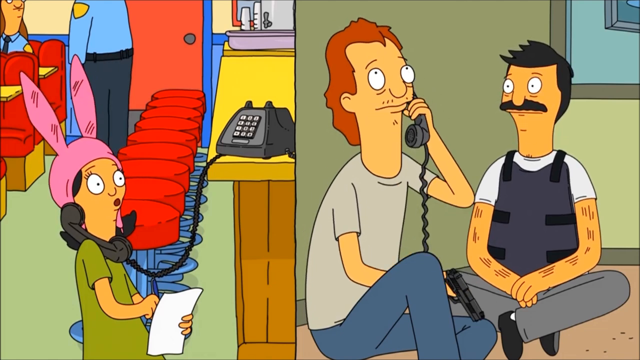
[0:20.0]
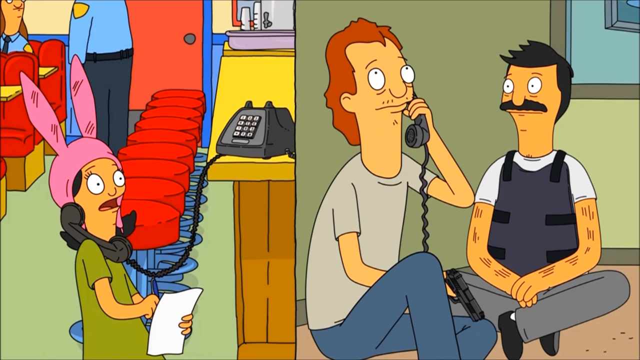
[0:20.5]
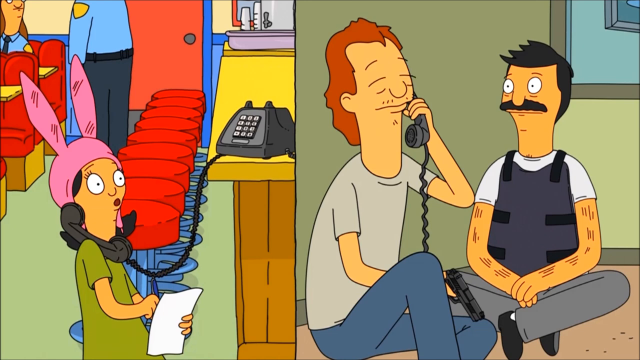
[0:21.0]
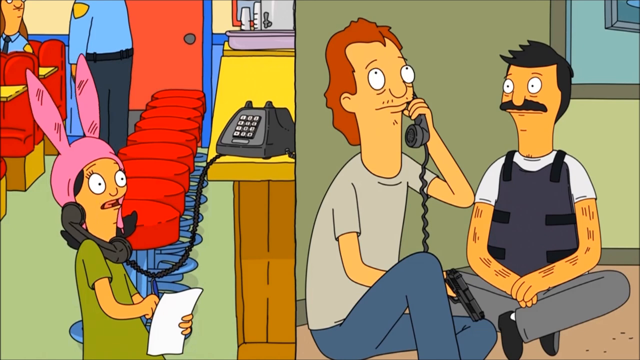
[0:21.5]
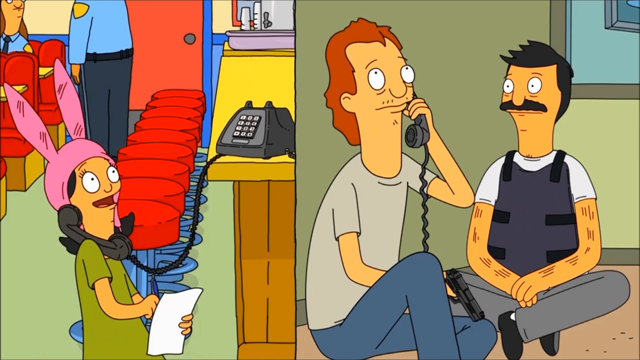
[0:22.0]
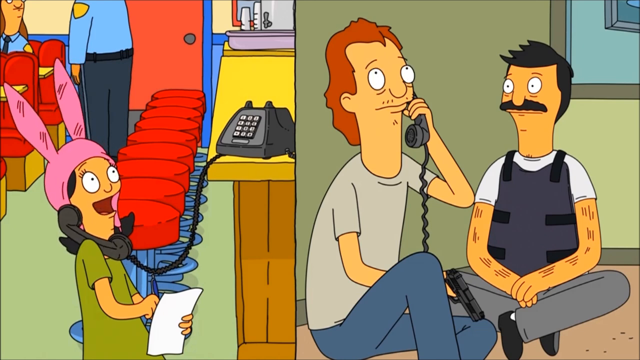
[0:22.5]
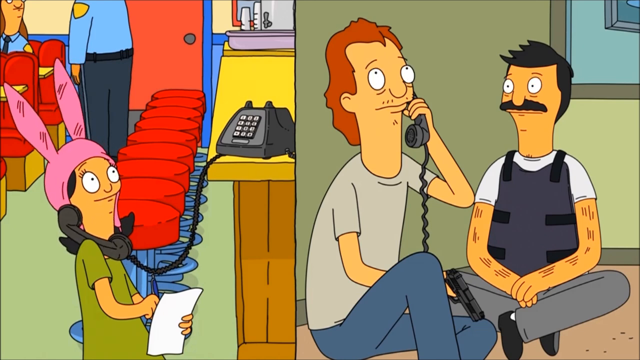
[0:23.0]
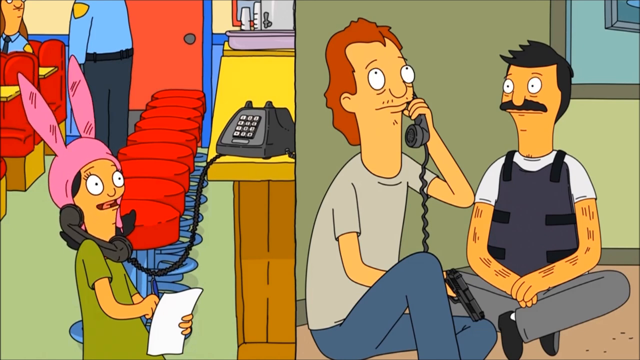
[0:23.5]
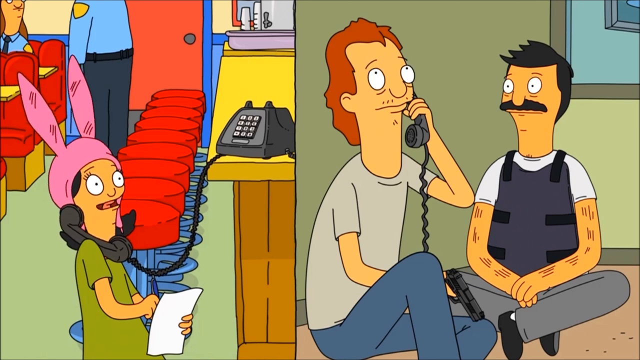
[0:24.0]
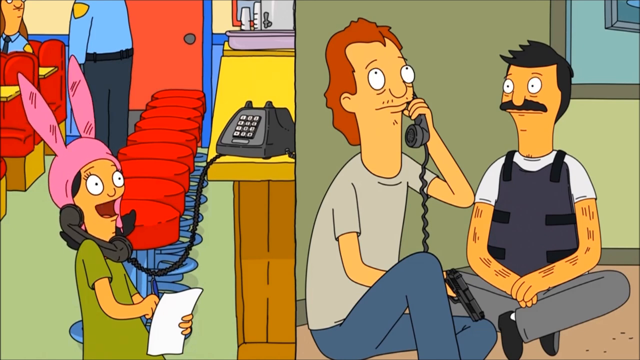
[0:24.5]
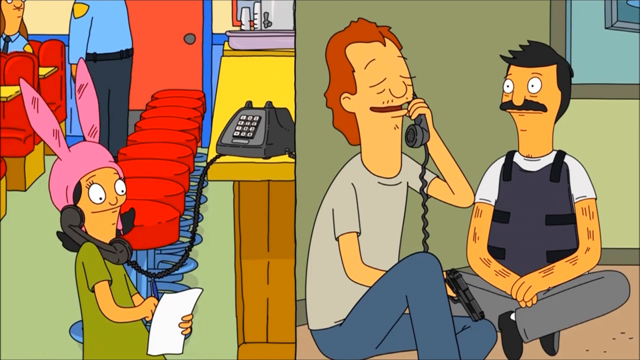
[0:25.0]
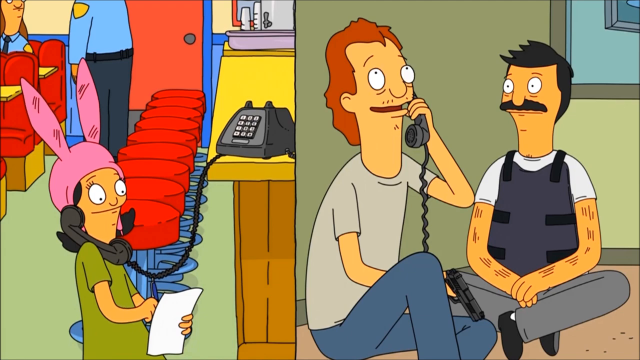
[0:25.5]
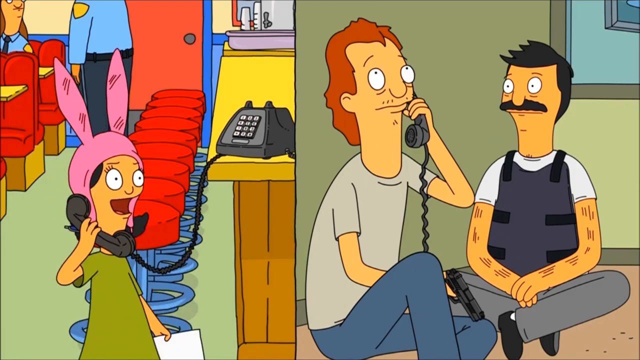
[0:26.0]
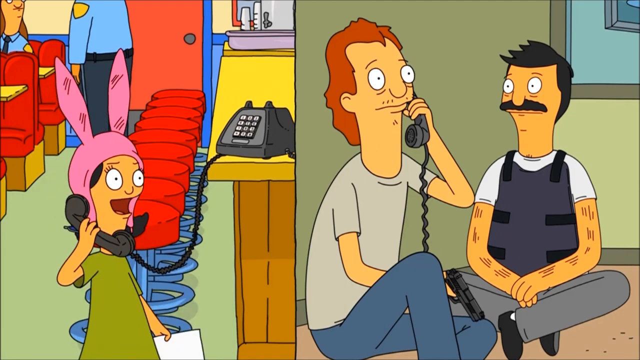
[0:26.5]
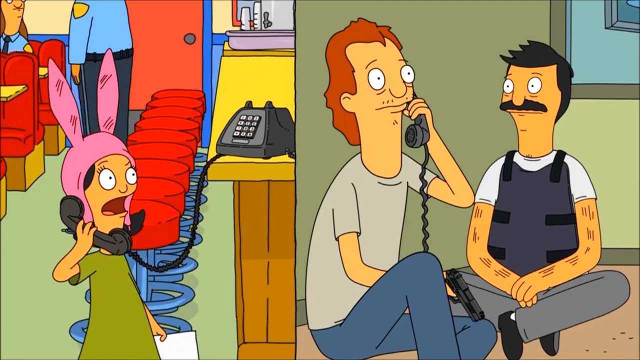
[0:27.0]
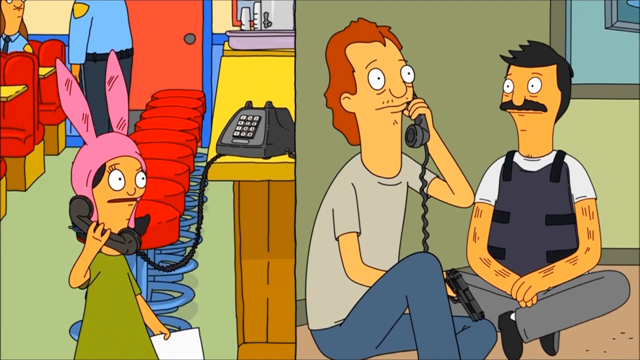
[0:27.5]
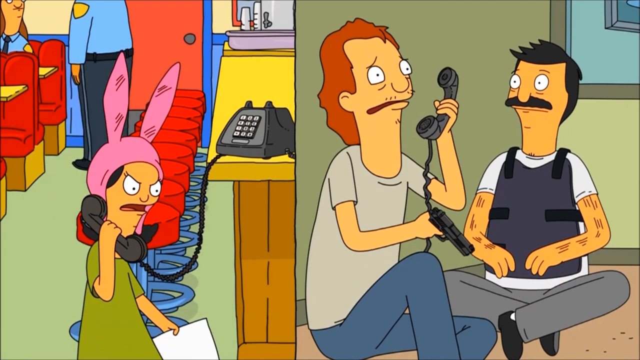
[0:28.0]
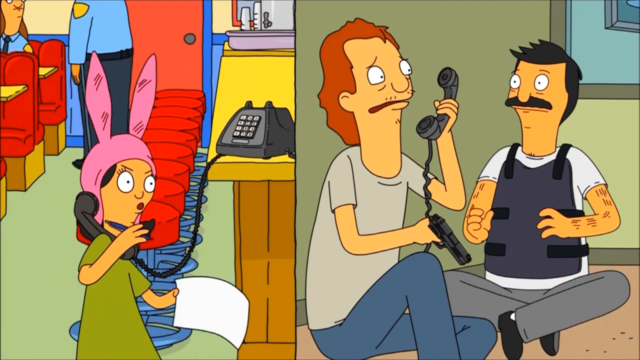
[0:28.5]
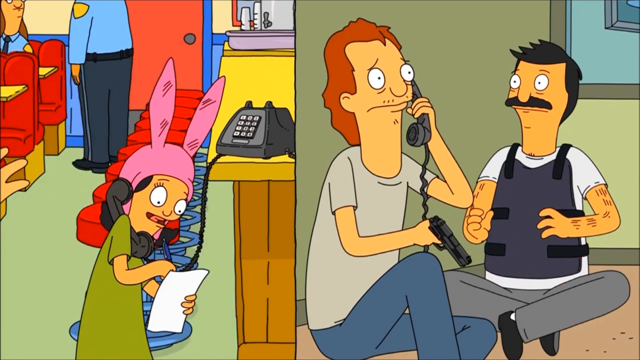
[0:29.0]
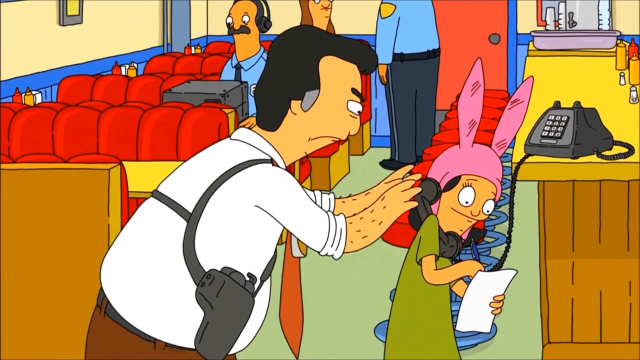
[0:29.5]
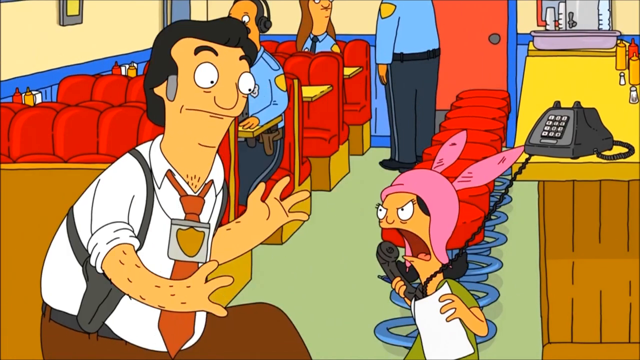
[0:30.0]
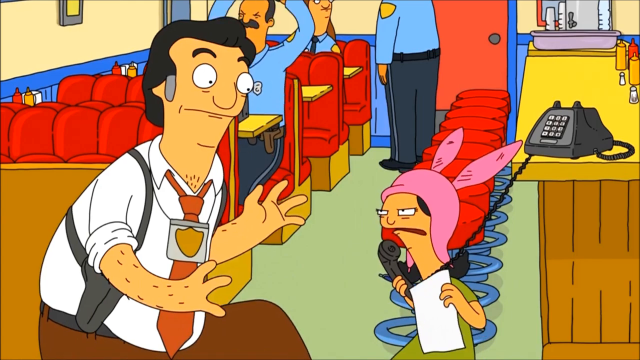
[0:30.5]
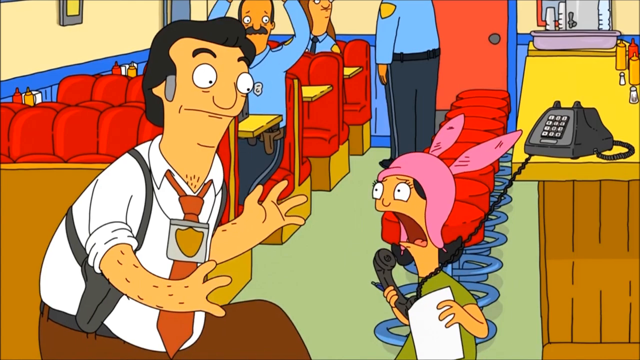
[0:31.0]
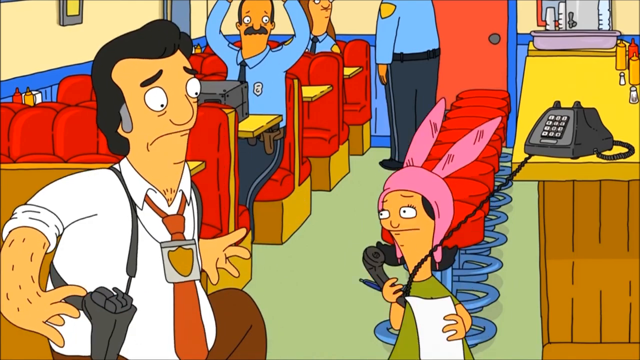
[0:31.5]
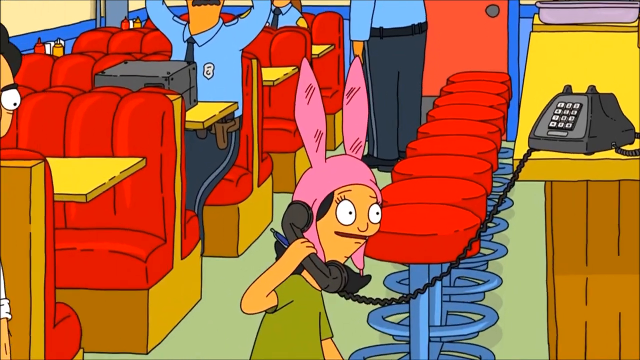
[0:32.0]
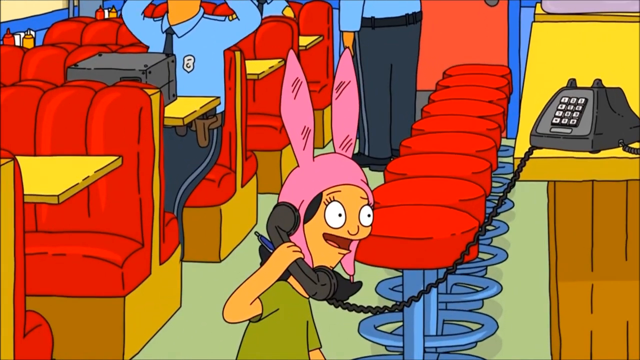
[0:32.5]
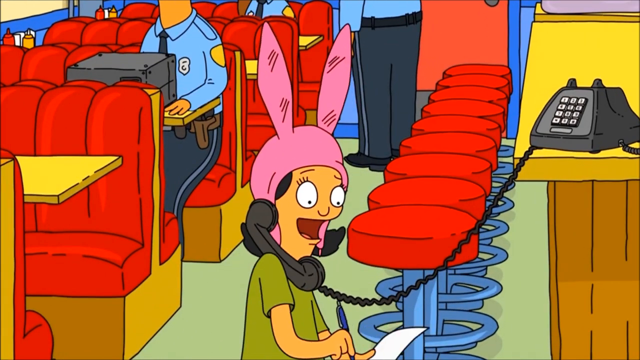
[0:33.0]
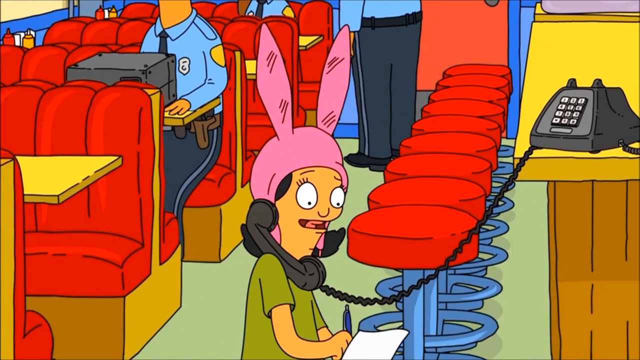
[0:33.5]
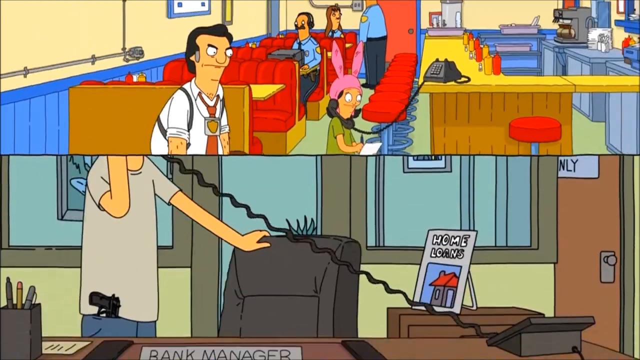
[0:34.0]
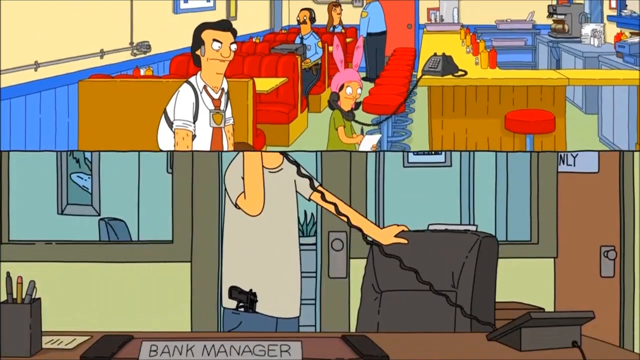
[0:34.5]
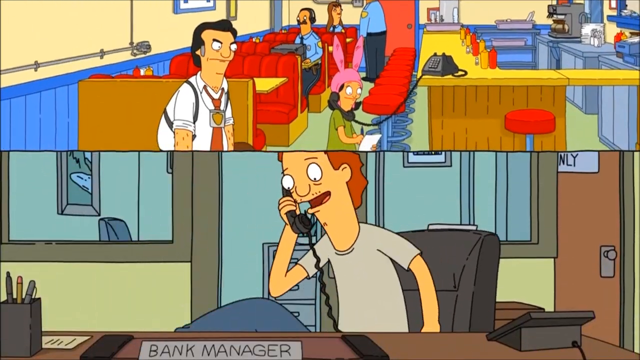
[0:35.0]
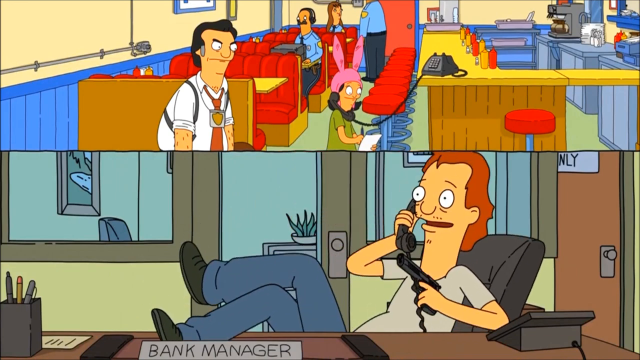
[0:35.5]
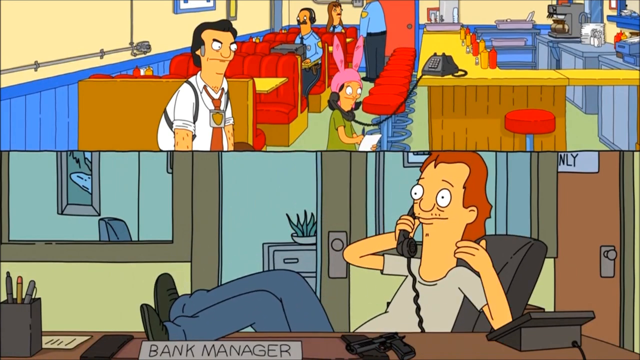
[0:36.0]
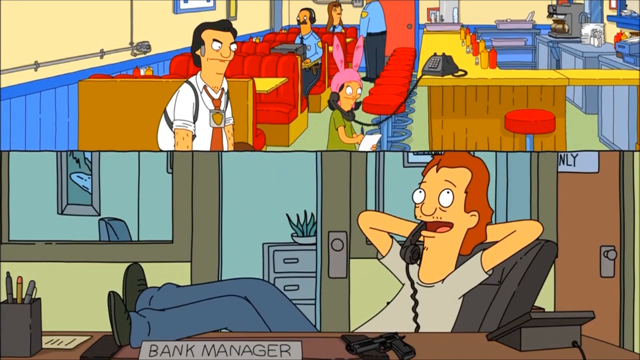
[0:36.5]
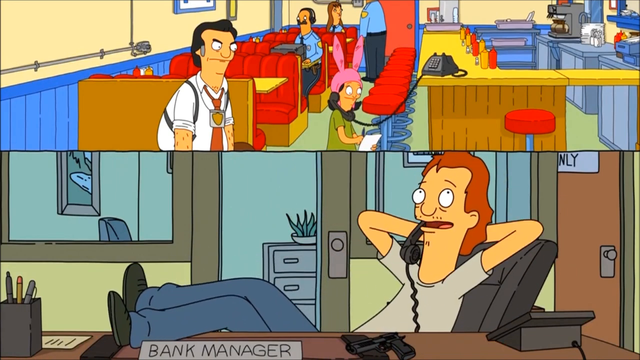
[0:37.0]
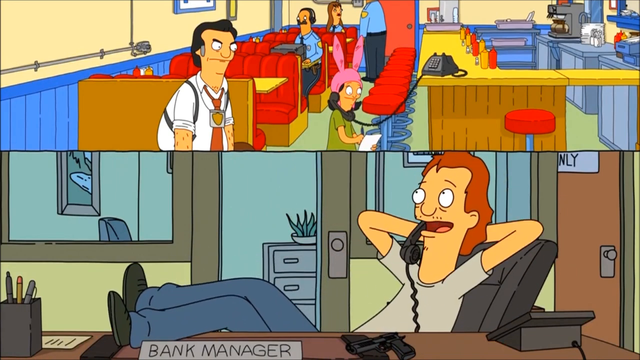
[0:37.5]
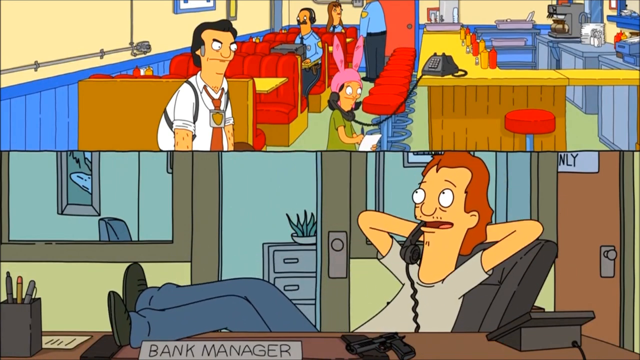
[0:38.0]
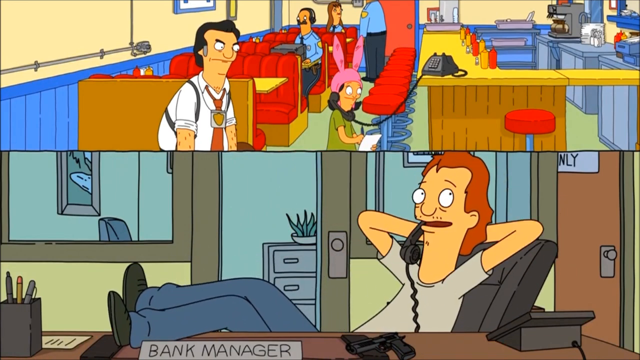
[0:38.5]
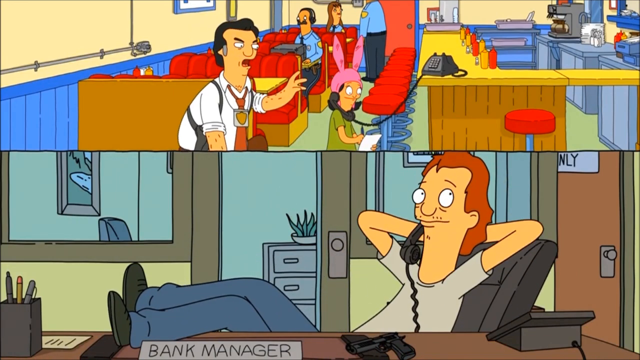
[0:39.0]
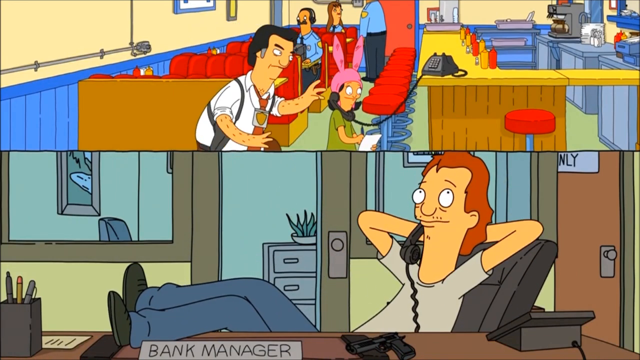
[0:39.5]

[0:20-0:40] The girl in the bunny hat is still talking on the phone to the person with the gun, who looks a little worried. She suddenly turns around and talks to the guy who looks like a detective, and she looks quite frightened; he looks very flustered that she is on the phone. The screen splits halfway to show the guy with the gun lounging on an office chair with his legs up on a desk and his arms behind his head, the phone still with him; he looks quite relaxed. Meanwhile the detective tries to get the girl to stop talking on the phone, but she resists him. He carries something on his side that looks like it might be a gun, and he has some kind of badge, probably indicating that he is a detective.